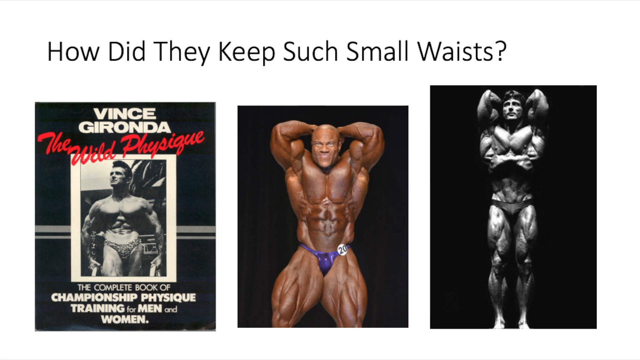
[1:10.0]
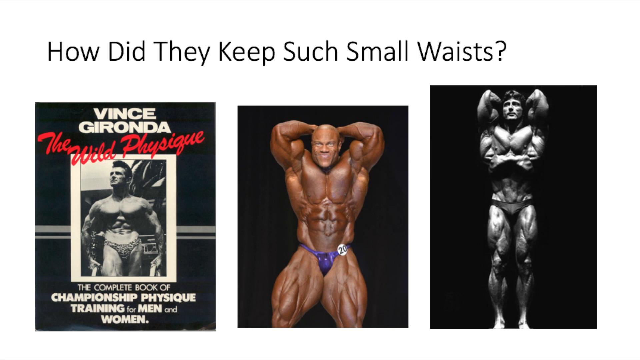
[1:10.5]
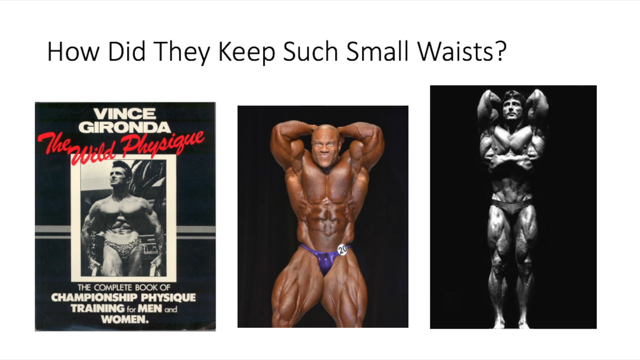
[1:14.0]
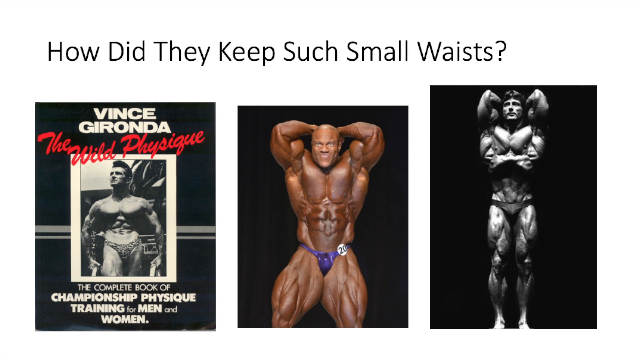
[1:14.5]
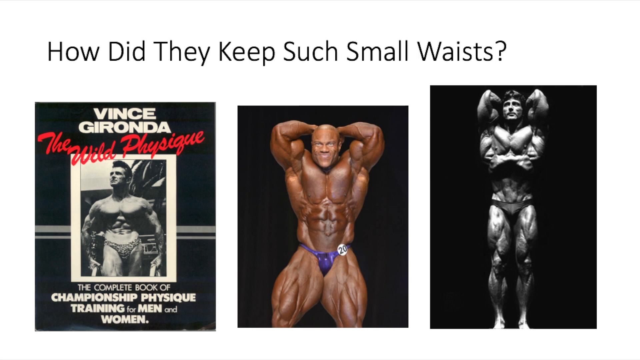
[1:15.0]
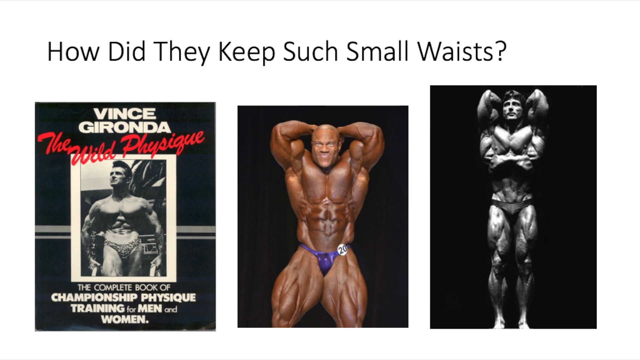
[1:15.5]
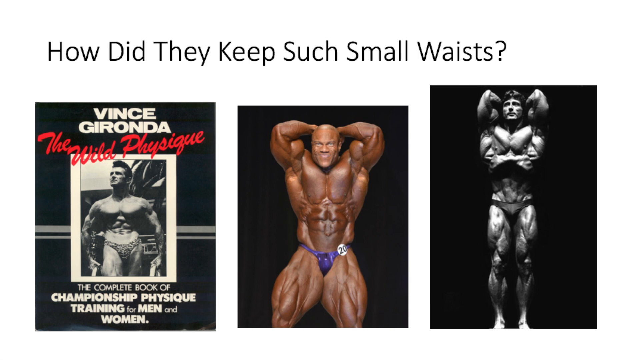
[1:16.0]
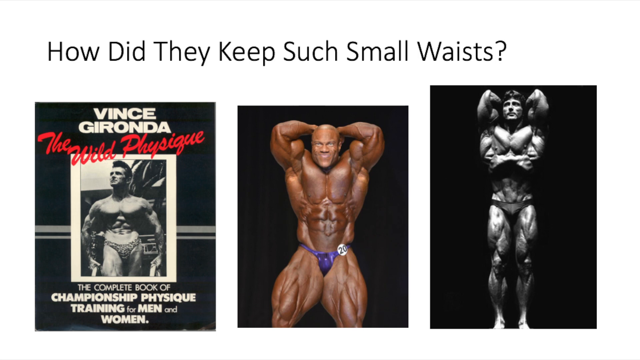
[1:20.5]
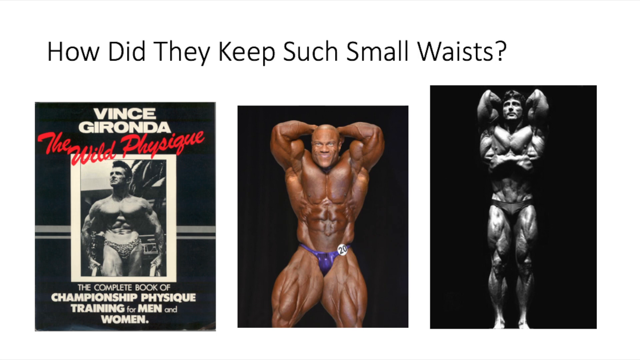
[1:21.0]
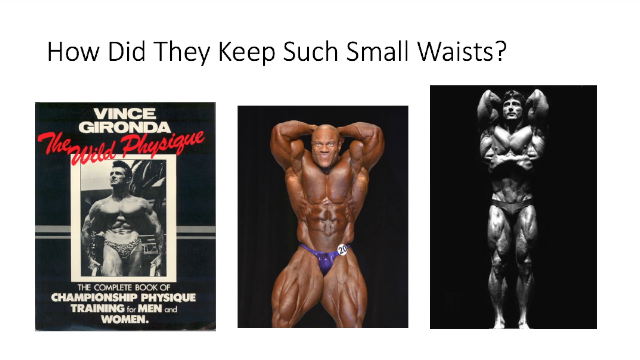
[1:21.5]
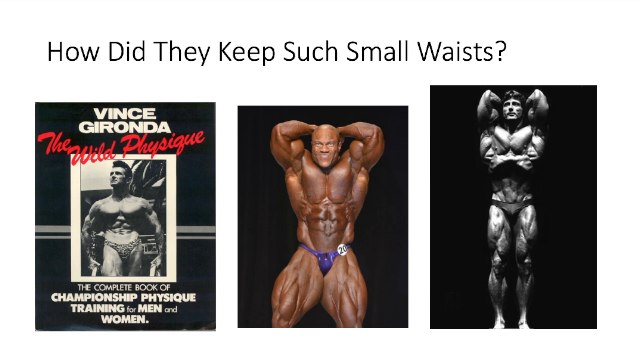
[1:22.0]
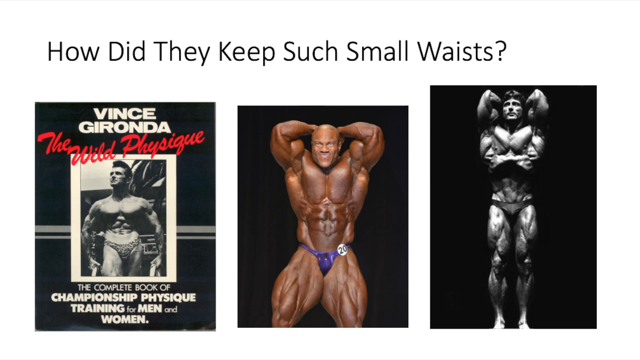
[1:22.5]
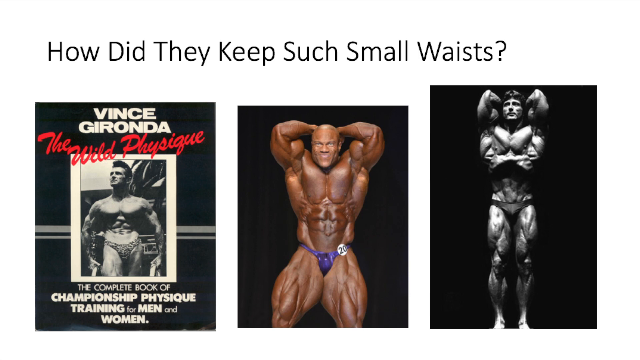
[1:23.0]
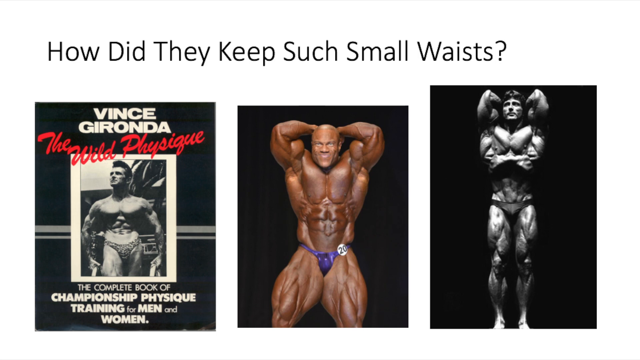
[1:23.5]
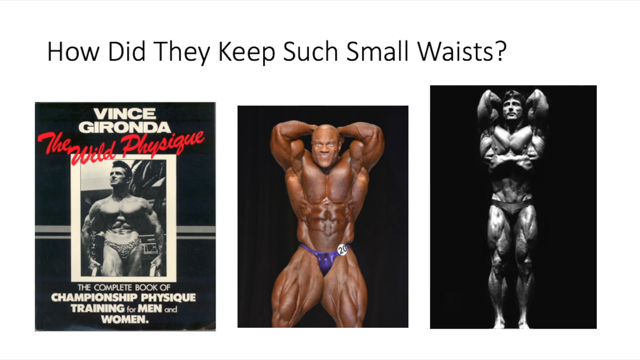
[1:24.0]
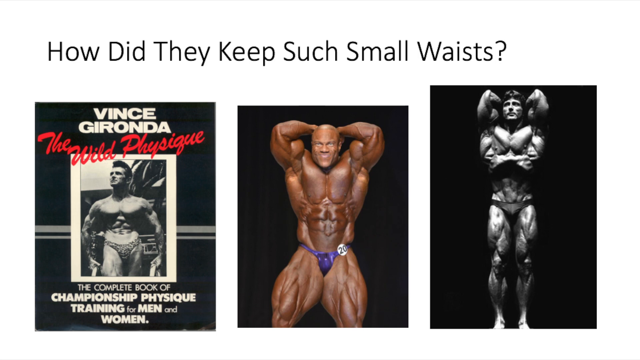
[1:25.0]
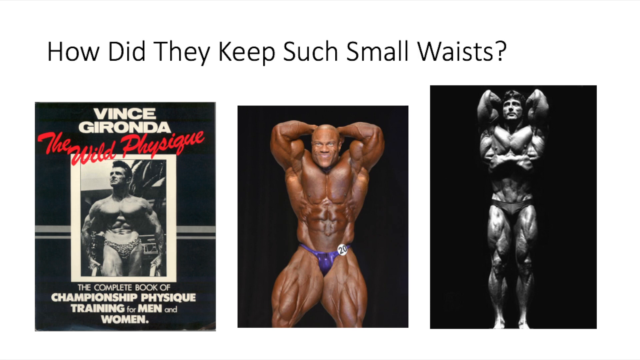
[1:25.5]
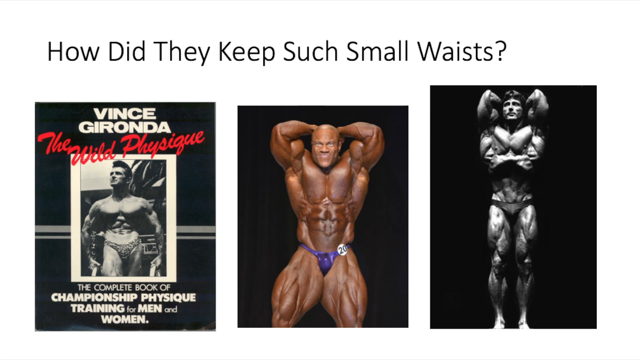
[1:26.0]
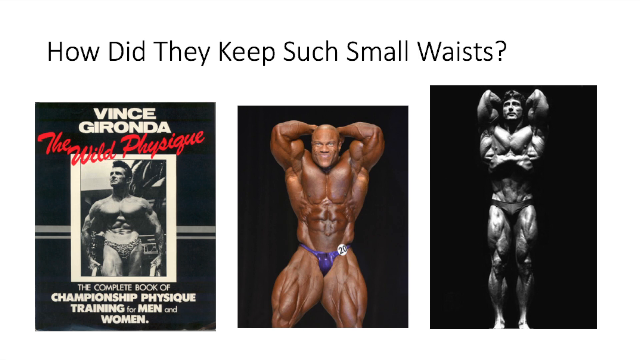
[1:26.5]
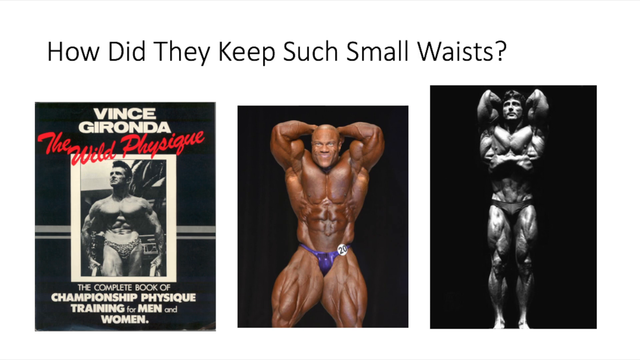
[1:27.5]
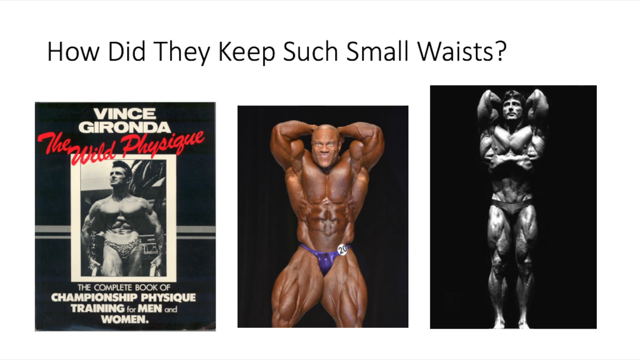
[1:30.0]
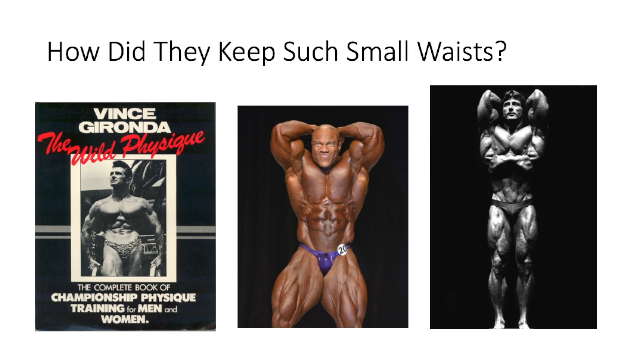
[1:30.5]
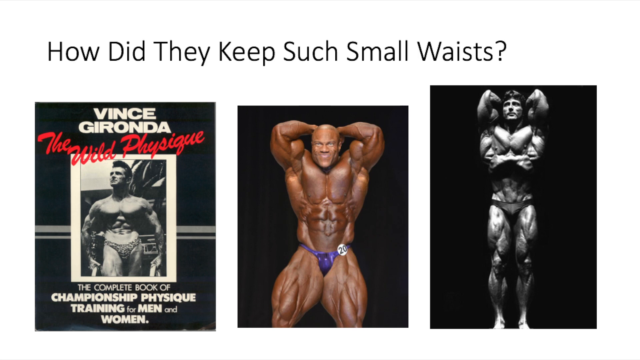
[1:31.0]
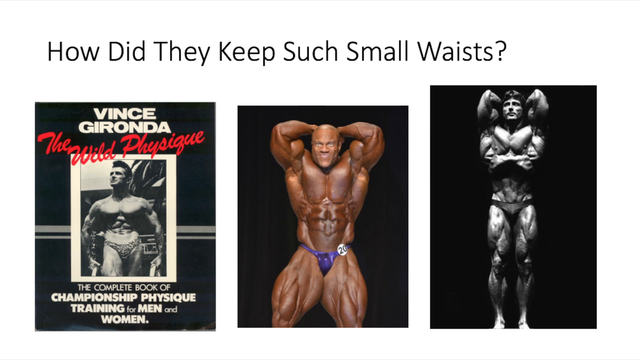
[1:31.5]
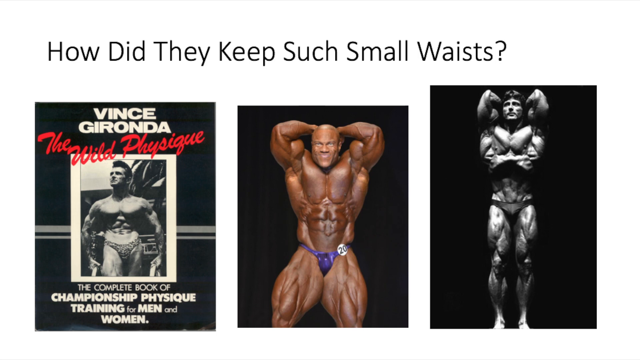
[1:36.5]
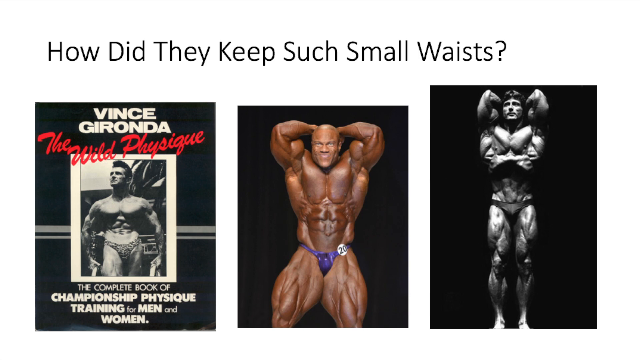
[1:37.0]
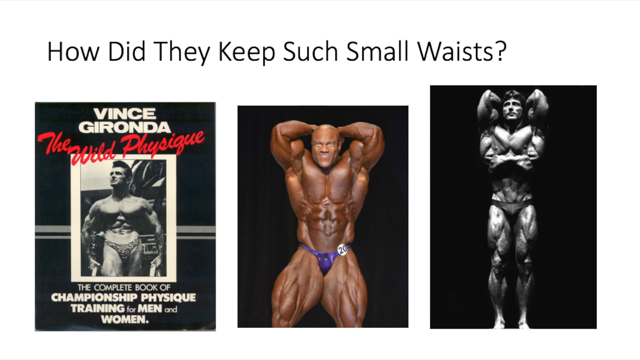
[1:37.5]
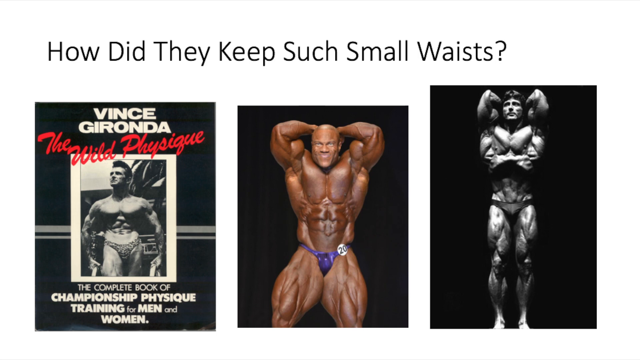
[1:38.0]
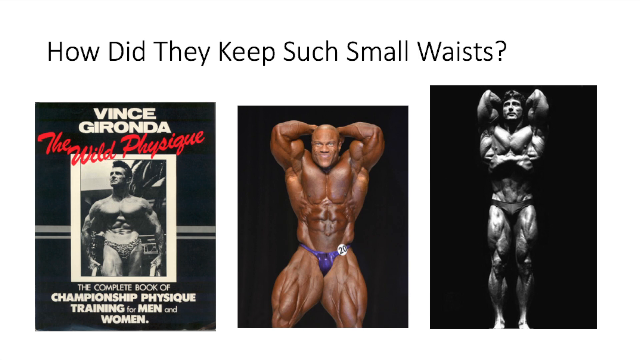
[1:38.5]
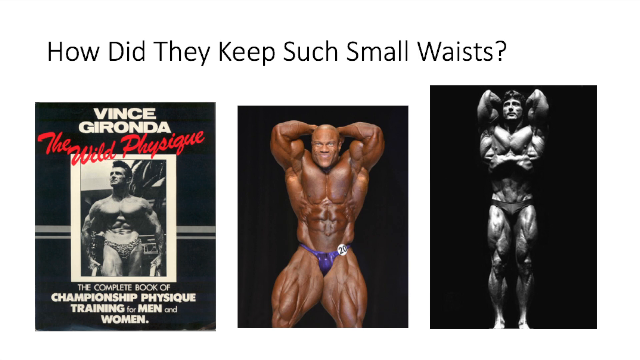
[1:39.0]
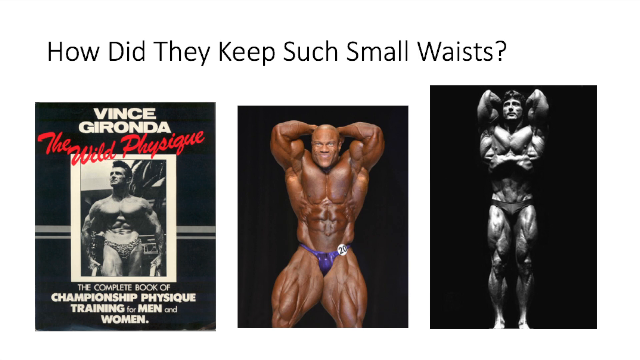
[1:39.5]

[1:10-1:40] The frame is a little wider than it is tall, with three pictures at the bottom. The left picture, in black and white, is labeled "Vince Garanda" and shows him facing the camera in posing shorts; it actually looks like a book. Below his name, red cursive text reads "the wild physique", and white text below the picture reads "the complete book of championship physique training for men and women". This picture is very faded, poor quality, fuzzy and very old-looking. The center picture is in color and shows another bodybuilder in purplish-blue shorts with the number 20 on his left hip, his hands behind his head and his elbows up in the air, showcasing his abs. On the right, in a black-and-white picture, a man who is apparently Frank Zane poses doing a vacuum. The center and right men both have black backgrounds around them.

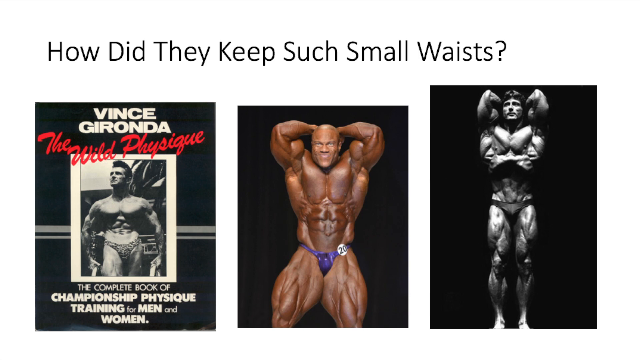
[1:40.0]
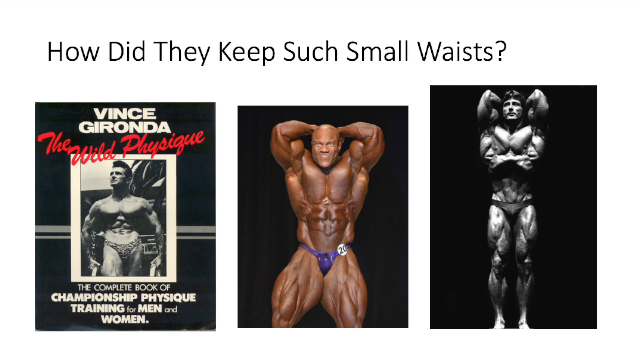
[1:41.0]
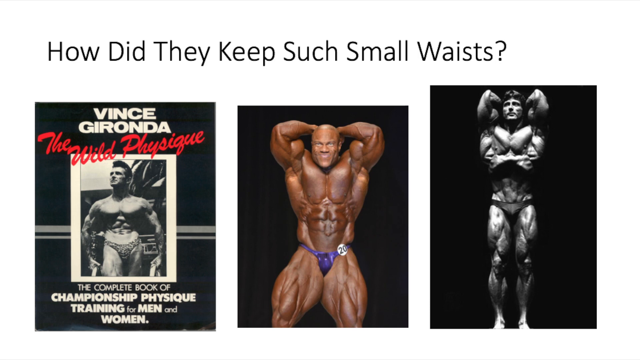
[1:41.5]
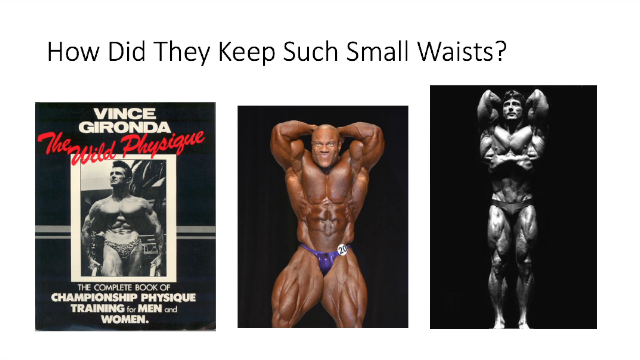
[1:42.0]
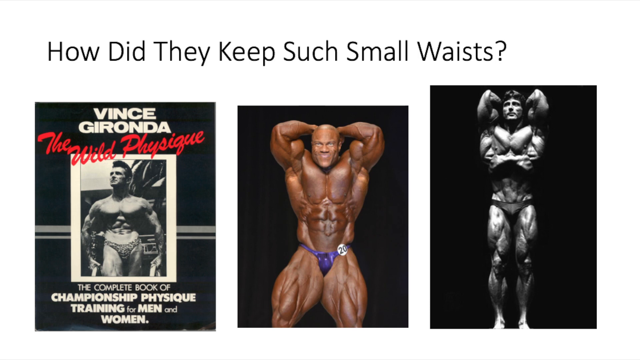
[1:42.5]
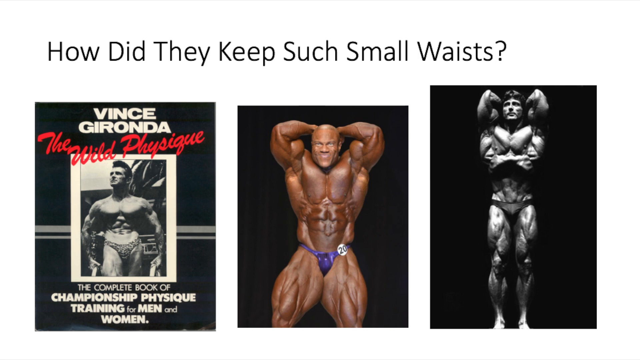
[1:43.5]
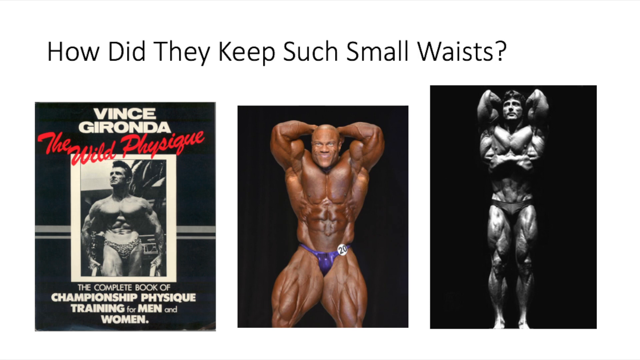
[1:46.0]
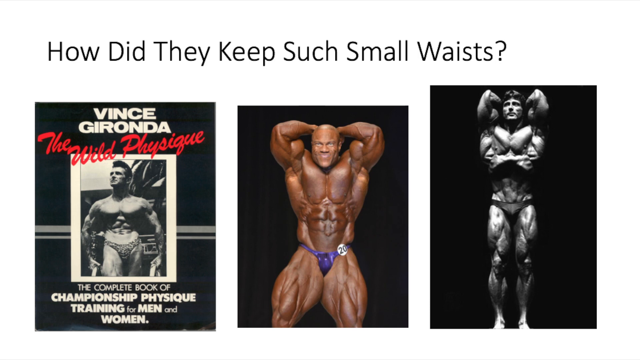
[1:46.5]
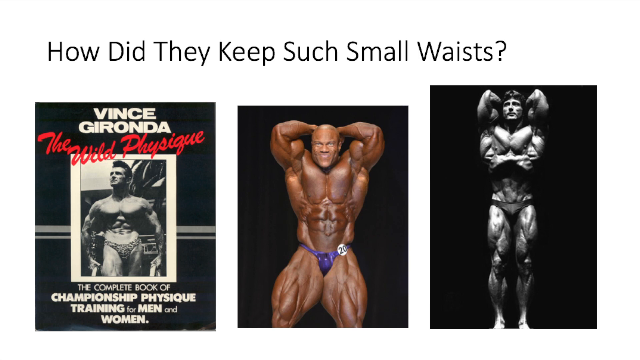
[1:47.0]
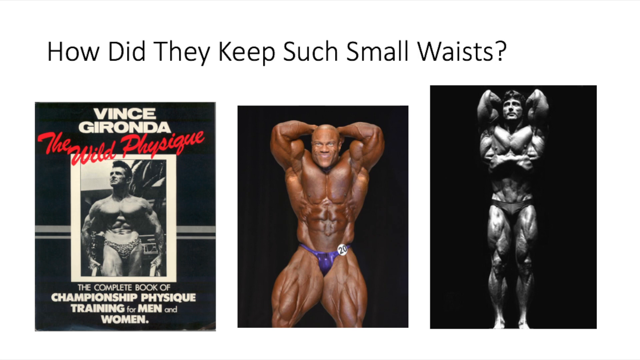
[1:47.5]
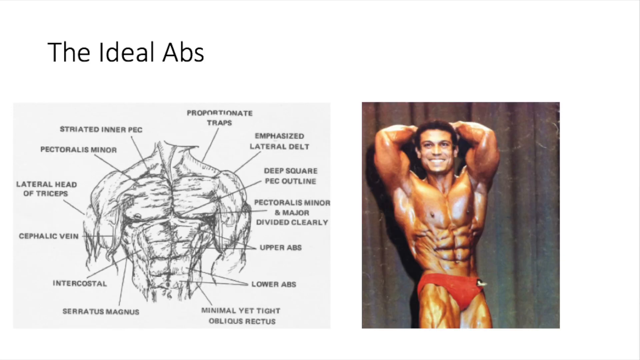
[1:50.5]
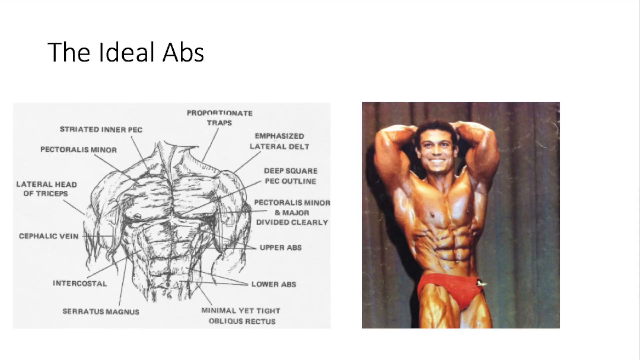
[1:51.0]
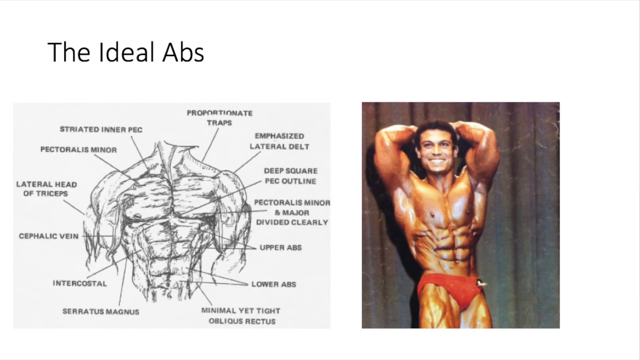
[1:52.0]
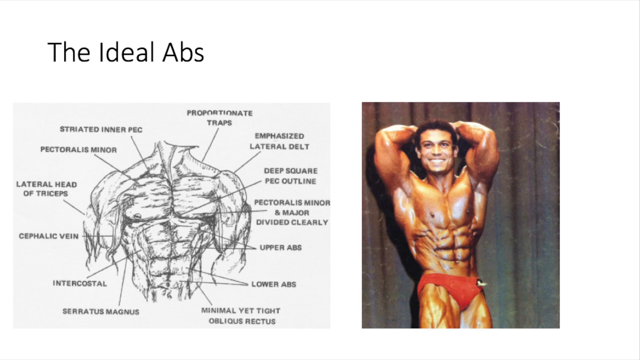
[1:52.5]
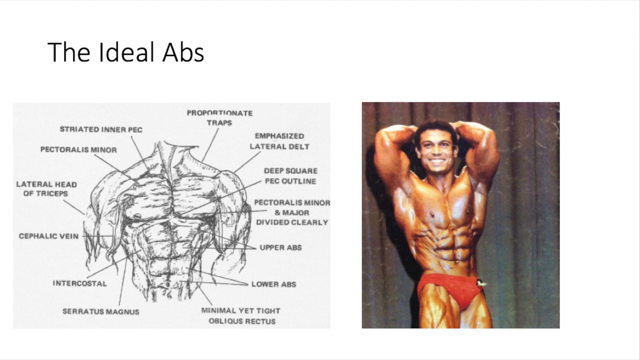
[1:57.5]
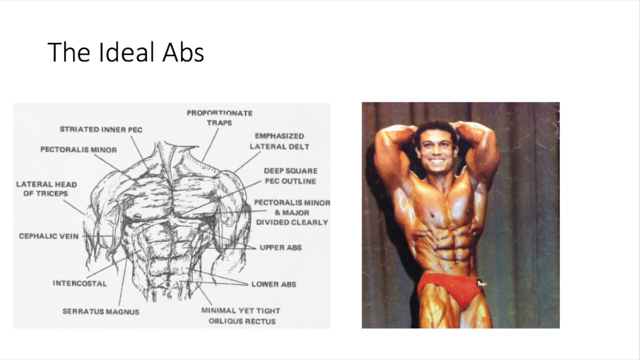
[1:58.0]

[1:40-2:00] The frame is a little wider than it is tall, with three pictures at the bottom. The first looks like the front of a book: white text at the top reads "Vince Garanda", red cursive writing below reads "the wild physique", and in the middle is a picture presumably of him, standing and facing the camera in posing shorts, visible from the knees up, in a kind of fuzzy black and white. Below, white text reads "the complete book of championship physique, training for men and women". In the center, a heavily tanned white man with blonde hair wears blue posing shorts with the number 20 on his left hip and has his hands behind his head, elbows in the air, really showing off his abs. On the right, in a slightly blurry black-and-white picture, a man who is apparently Frank Zane performs a vacuum. The video then goes to another slide with what is basically a pencil sketch of a man's torso, with pointers to the different muscle groups from the abs up to the shoulders, and on the right a picture of someone posing and showing off their abs.